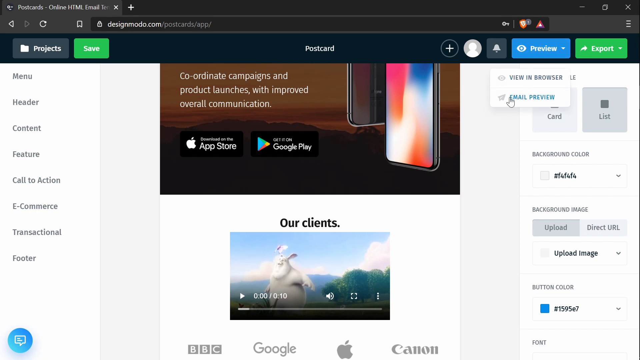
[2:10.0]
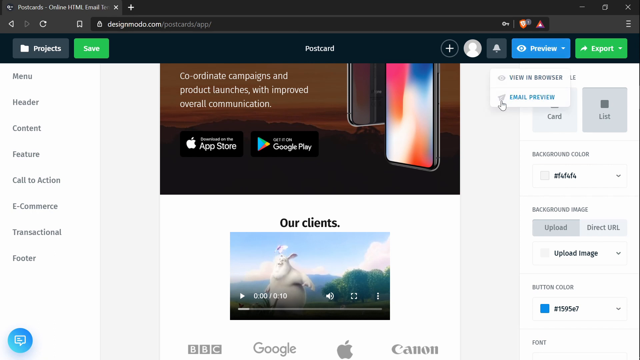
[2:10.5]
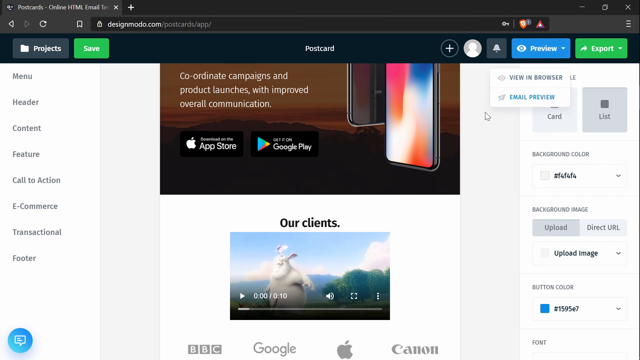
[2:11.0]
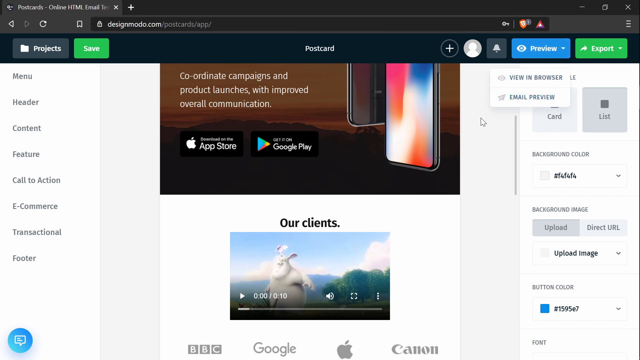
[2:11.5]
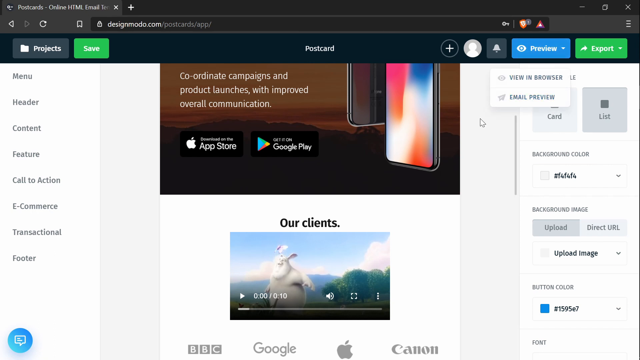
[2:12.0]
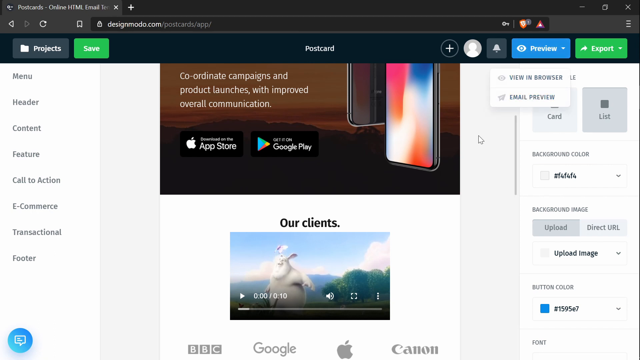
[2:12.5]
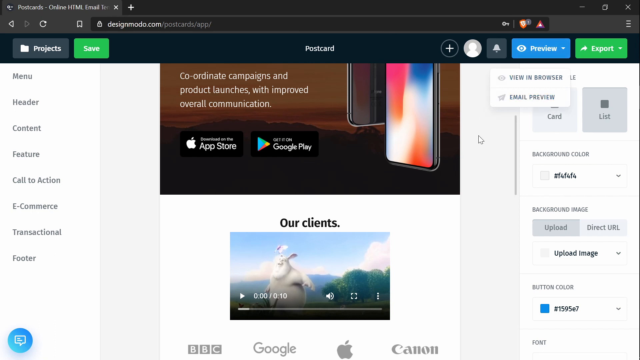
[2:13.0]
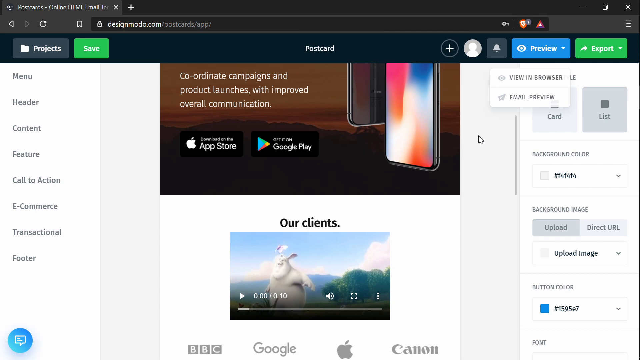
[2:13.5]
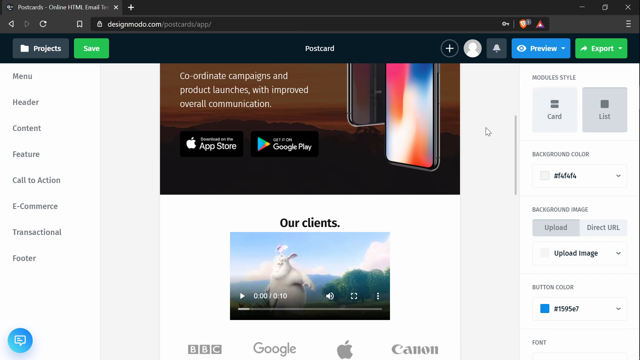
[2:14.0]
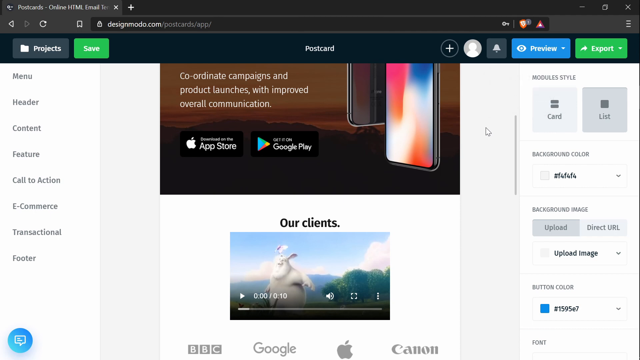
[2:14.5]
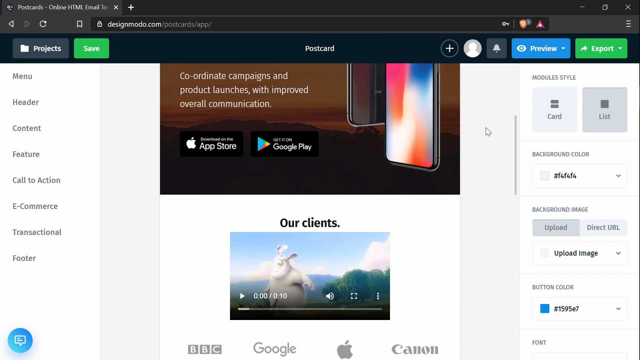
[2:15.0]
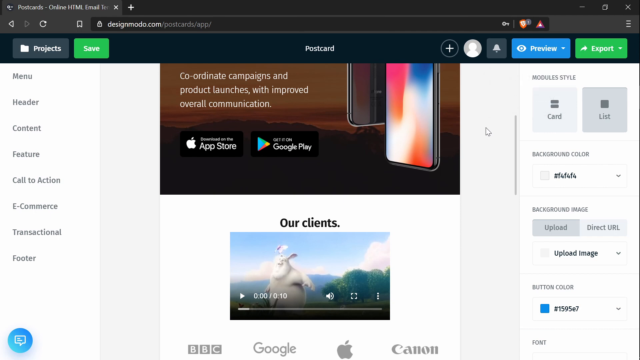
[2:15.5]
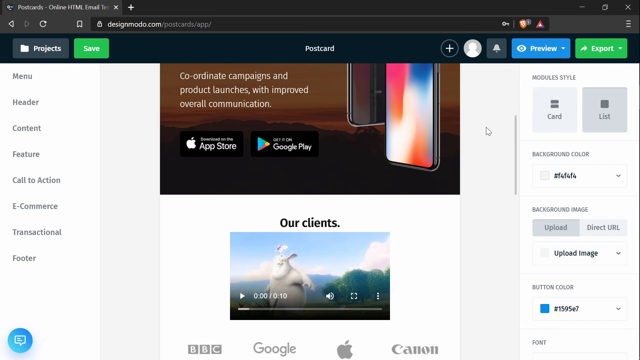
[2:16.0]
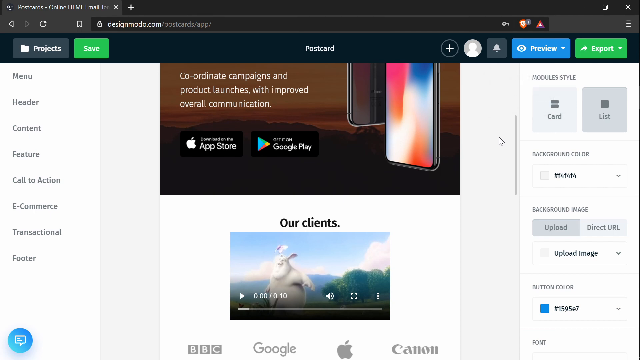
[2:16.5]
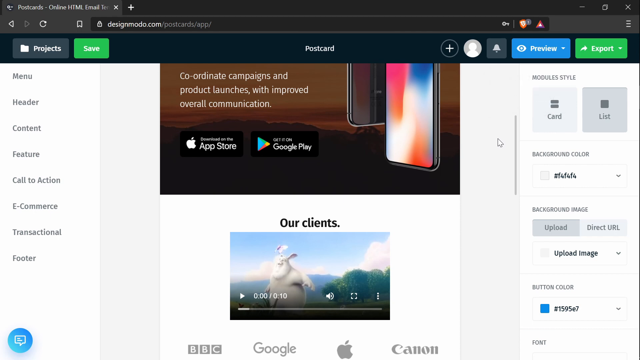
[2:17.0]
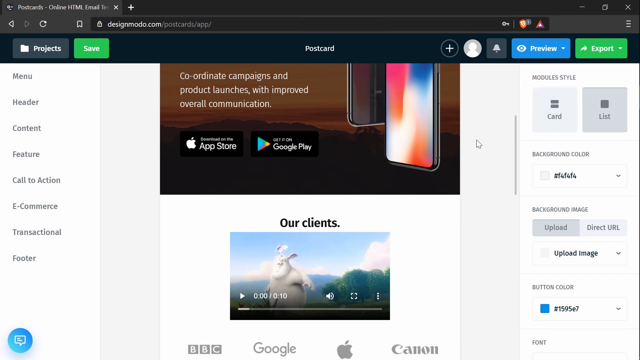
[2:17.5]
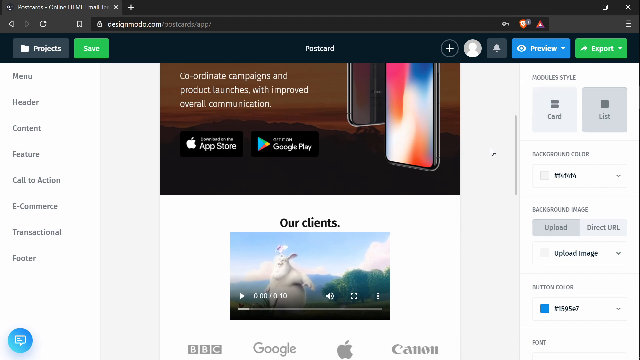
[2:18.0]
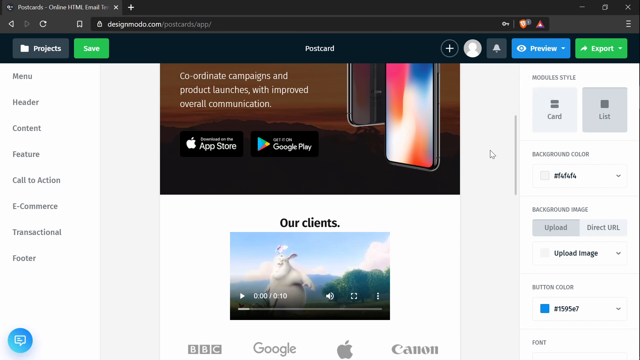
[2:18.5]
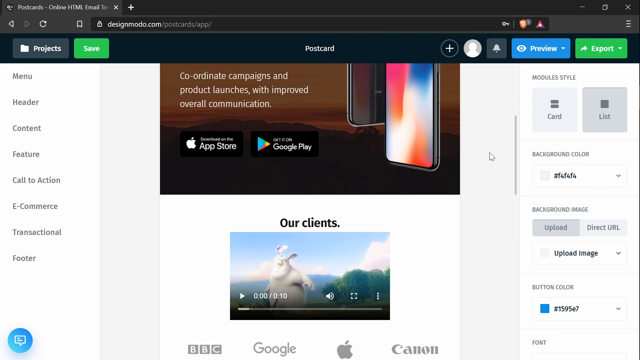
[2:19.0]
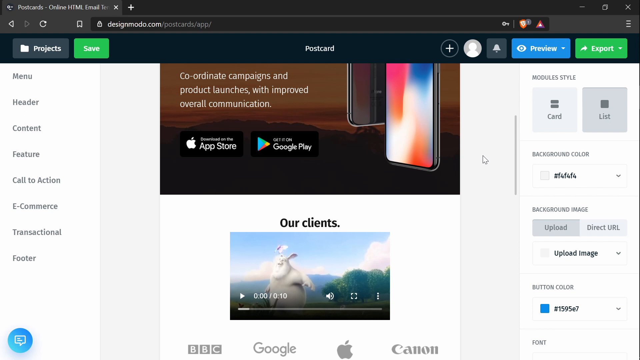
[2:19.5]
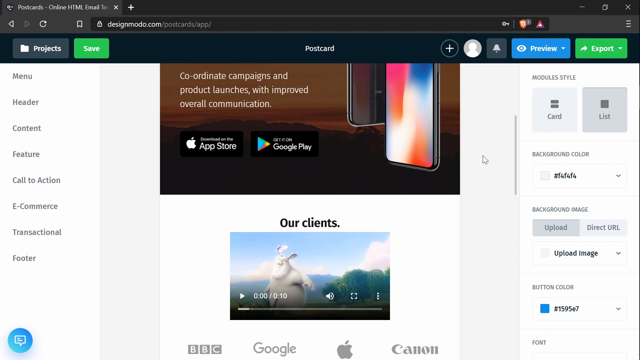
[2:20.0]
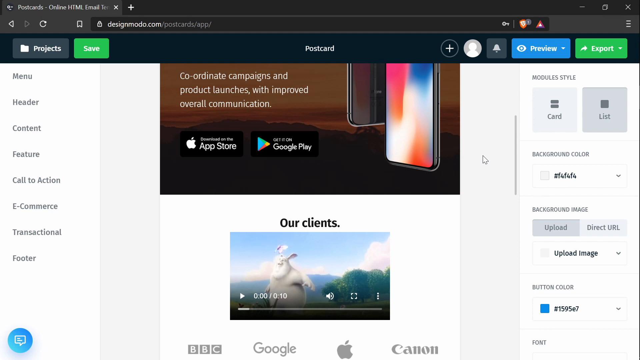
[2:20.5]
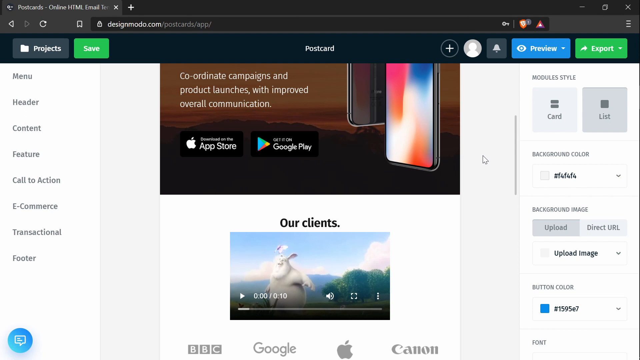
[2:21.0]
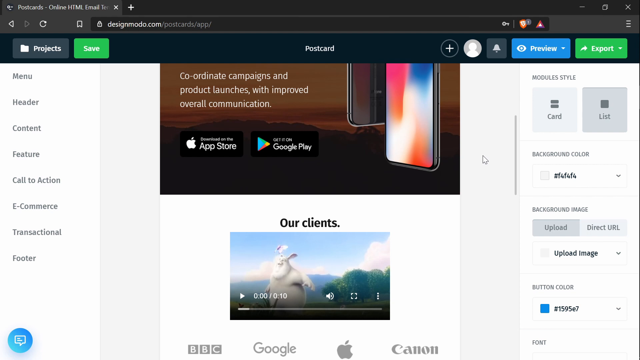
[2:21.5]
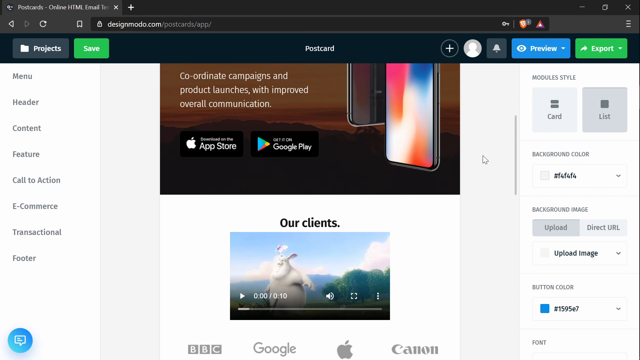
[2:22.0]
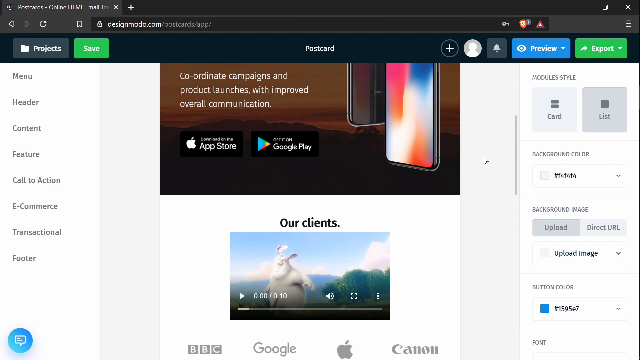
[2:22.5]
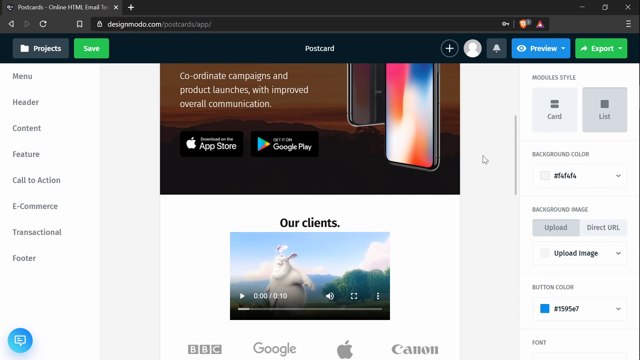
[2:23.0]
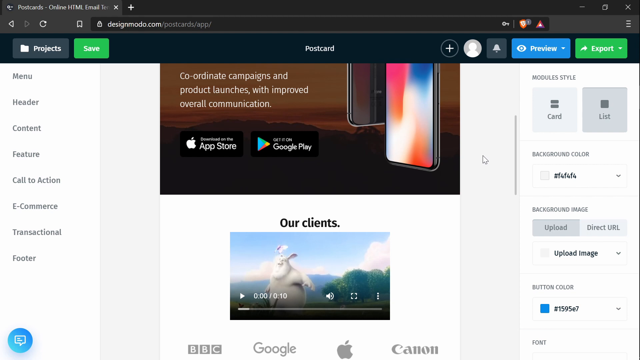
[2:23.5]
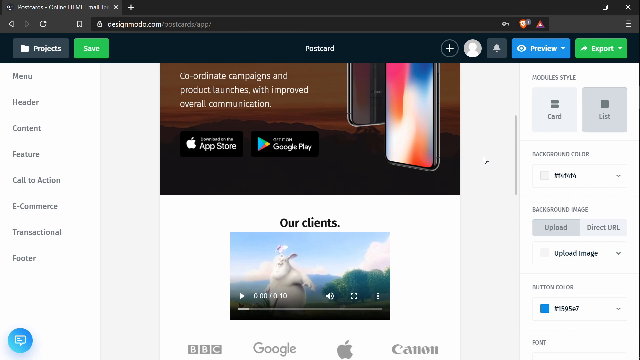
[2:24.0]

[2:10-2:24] Under the preview option there are two options, view in browser and email preview, and the person hovers over email preview for some time. The view in browser option has a picture of an eye next to it and the email preview option has a picture of a paper airplane. In the top right, next to the blue "preview", is "export" in white text on a green background. To the left of this is a notification bell, and to the left of that is a user icon showing just the outline of a figure. Further left is a plus sign, and in the centre is the title "postcard." On the left-hand side are save and projects, with save in green.